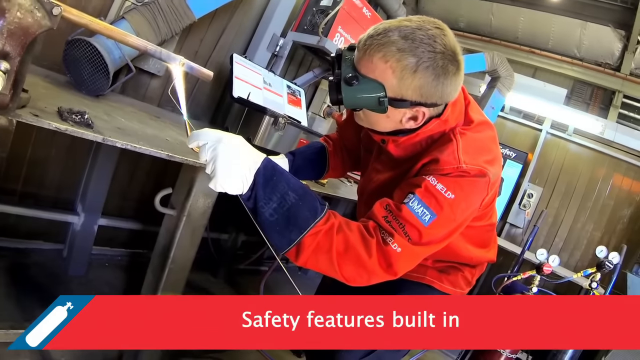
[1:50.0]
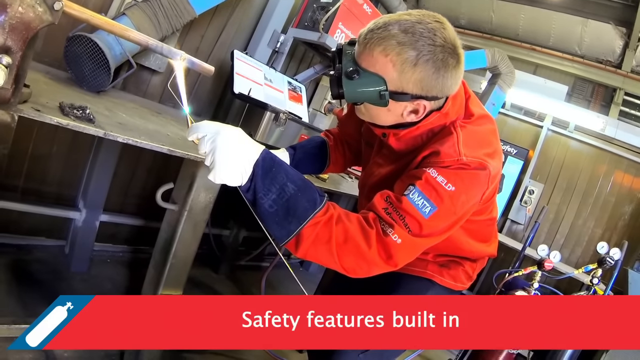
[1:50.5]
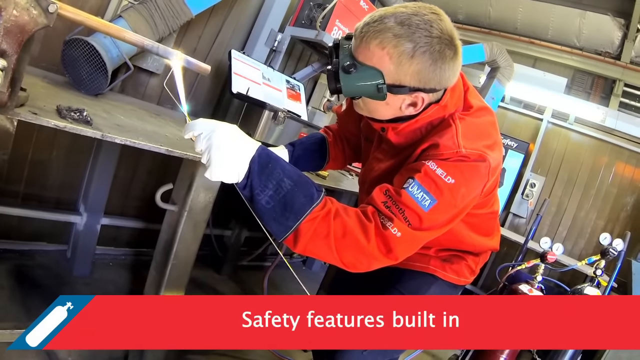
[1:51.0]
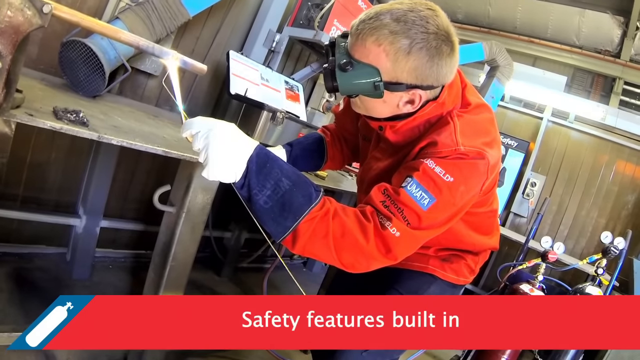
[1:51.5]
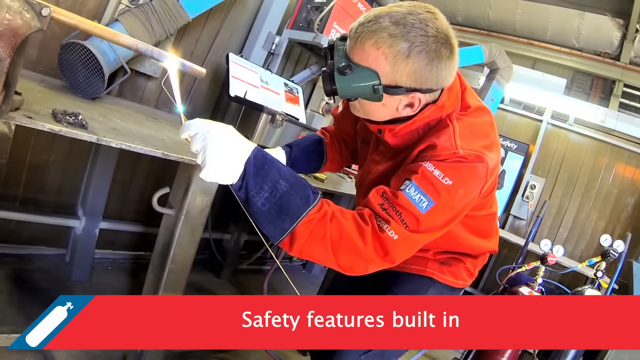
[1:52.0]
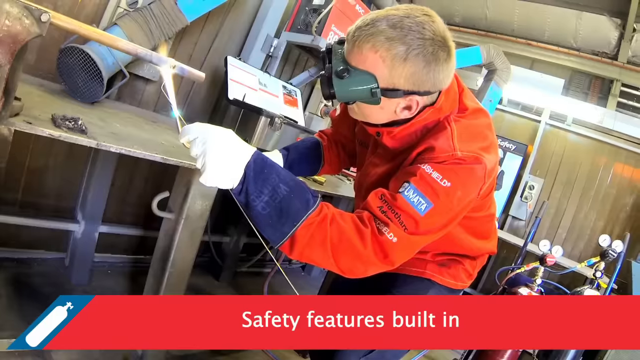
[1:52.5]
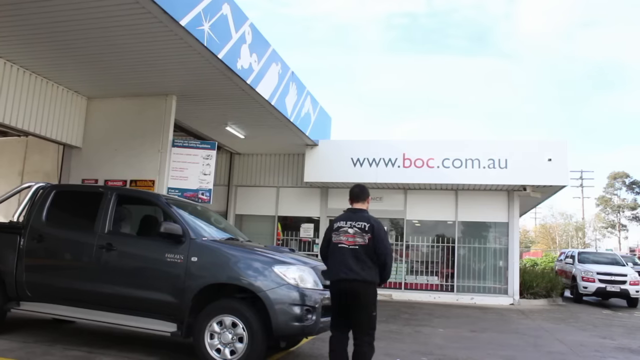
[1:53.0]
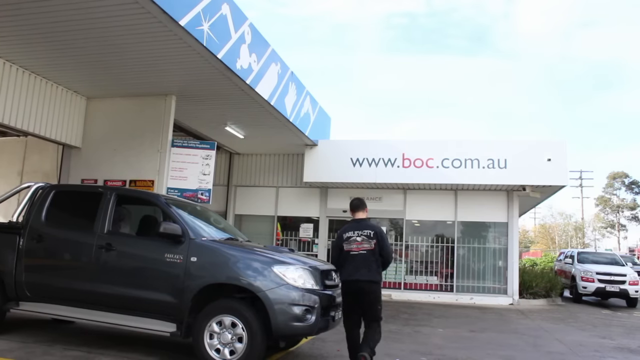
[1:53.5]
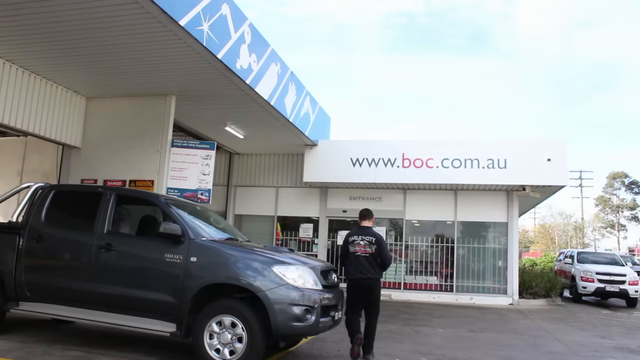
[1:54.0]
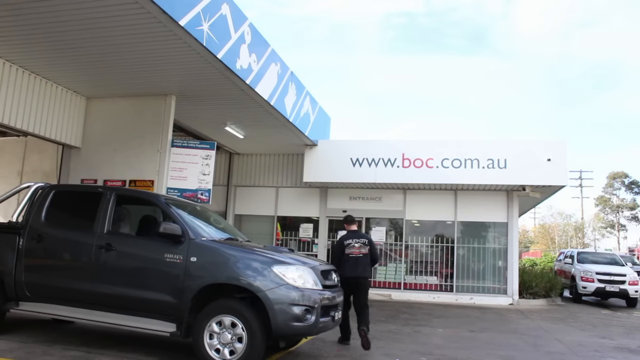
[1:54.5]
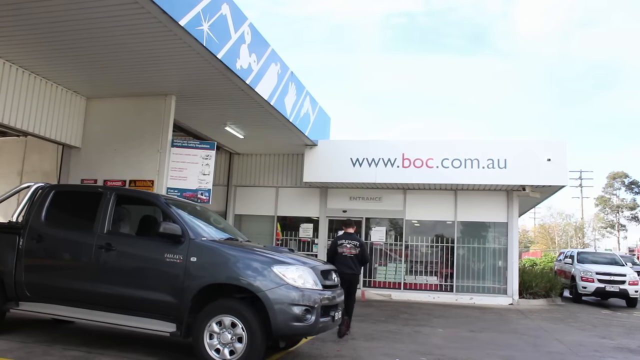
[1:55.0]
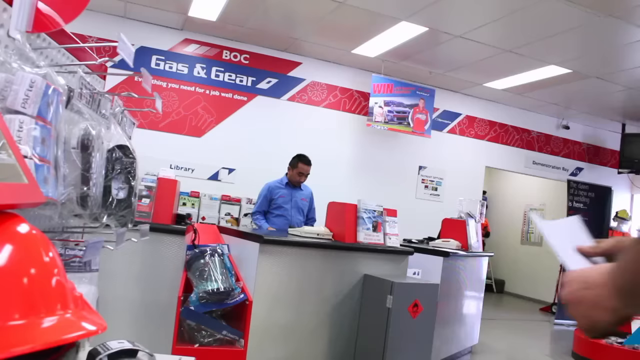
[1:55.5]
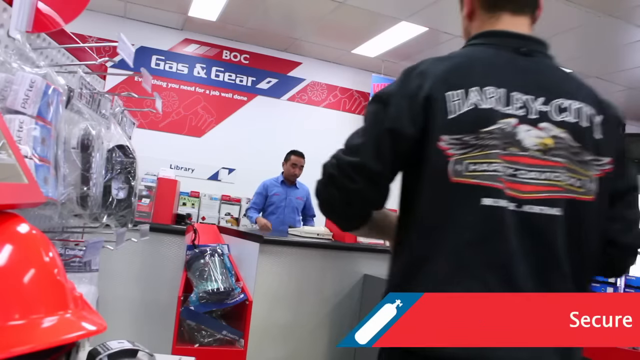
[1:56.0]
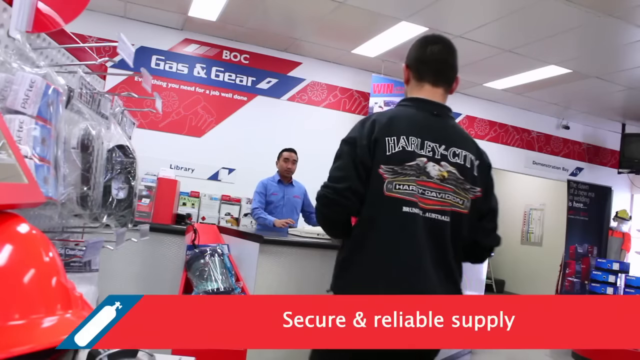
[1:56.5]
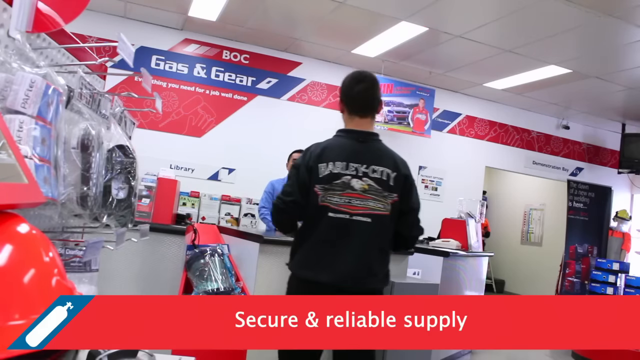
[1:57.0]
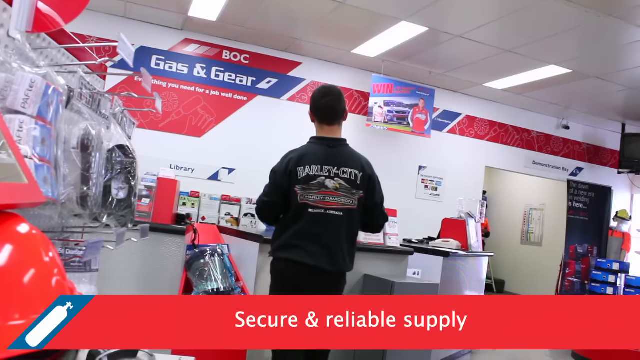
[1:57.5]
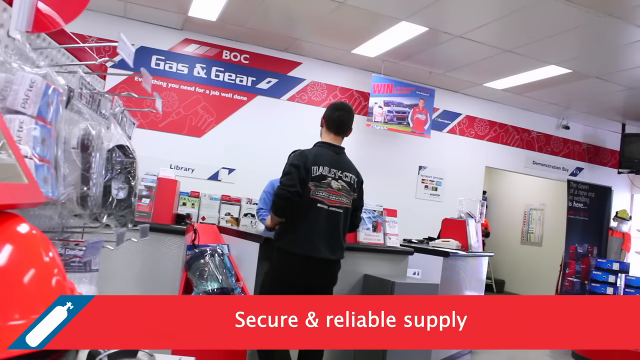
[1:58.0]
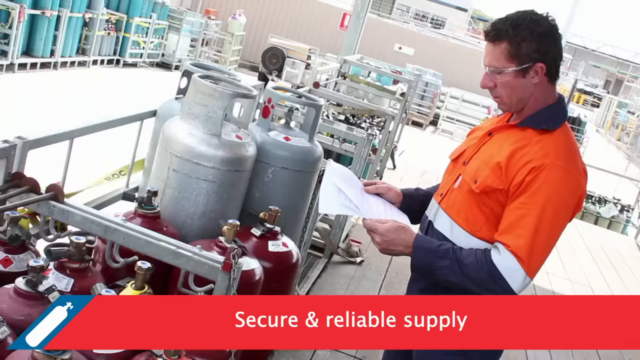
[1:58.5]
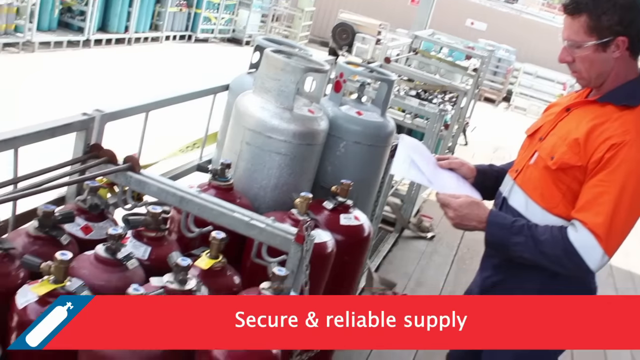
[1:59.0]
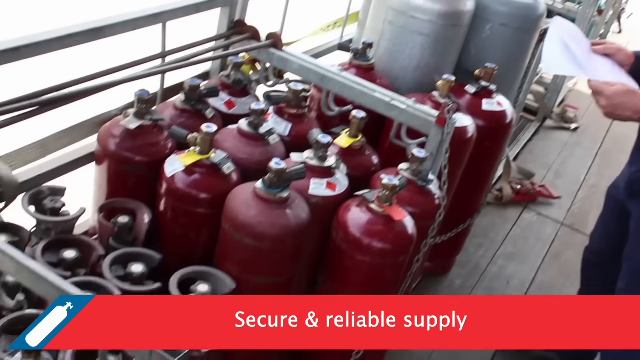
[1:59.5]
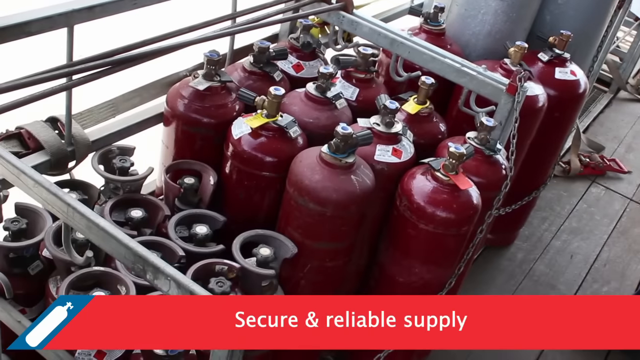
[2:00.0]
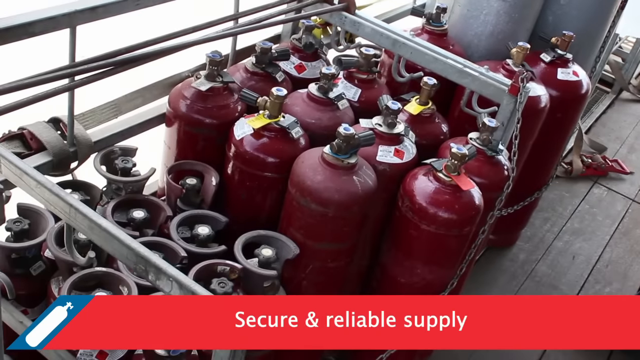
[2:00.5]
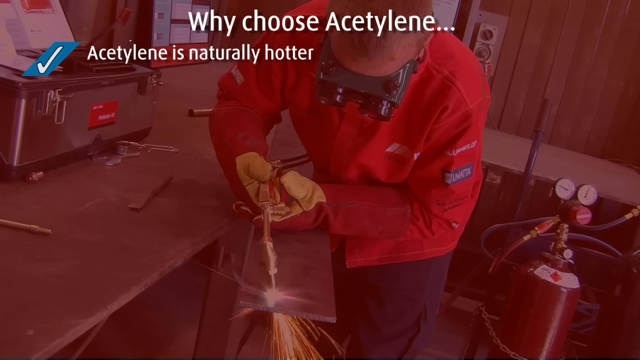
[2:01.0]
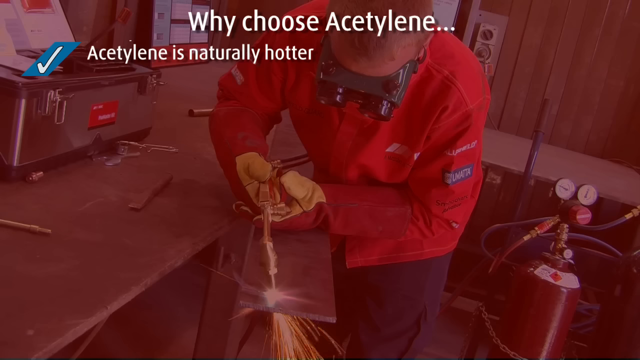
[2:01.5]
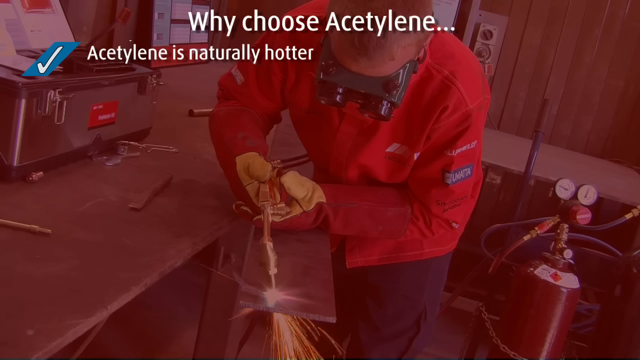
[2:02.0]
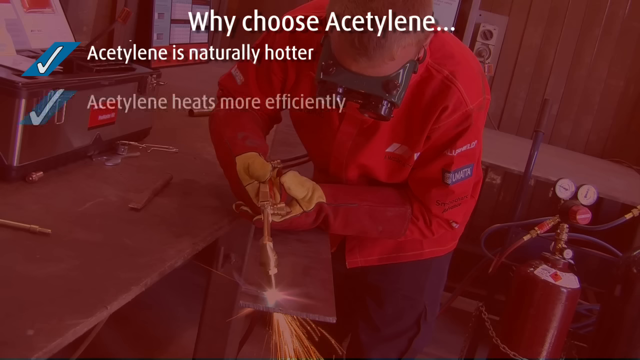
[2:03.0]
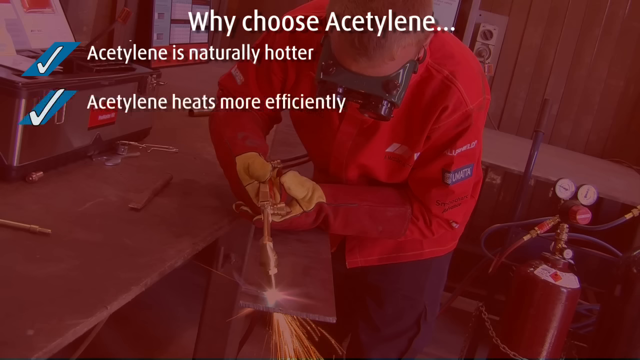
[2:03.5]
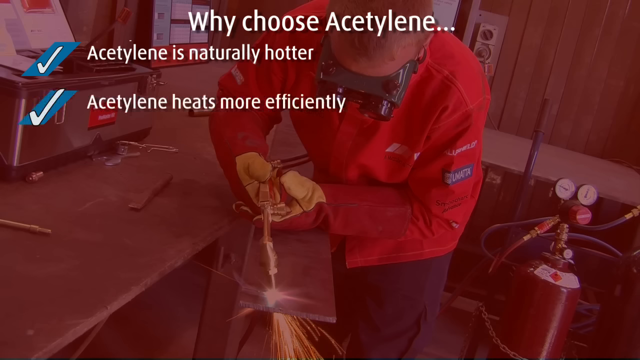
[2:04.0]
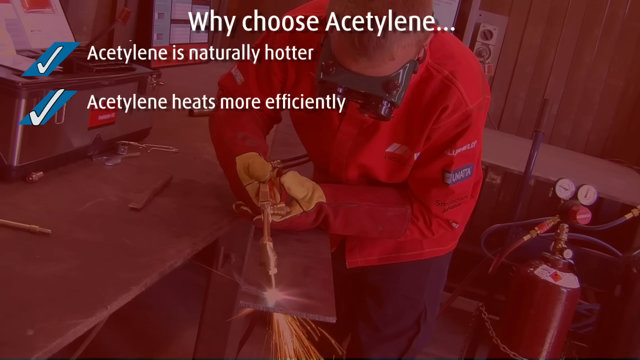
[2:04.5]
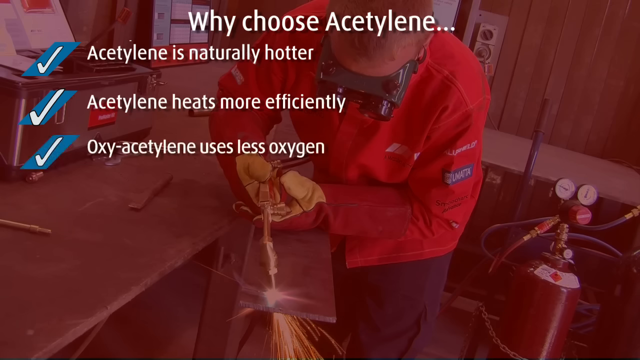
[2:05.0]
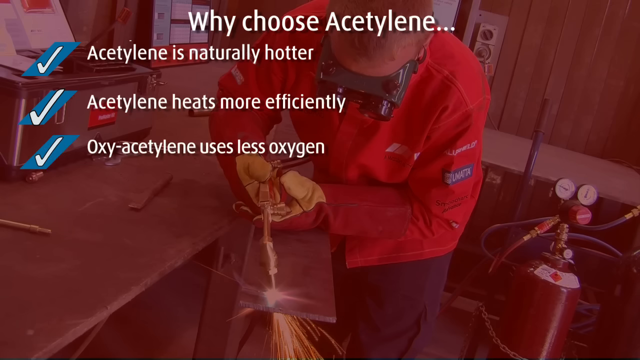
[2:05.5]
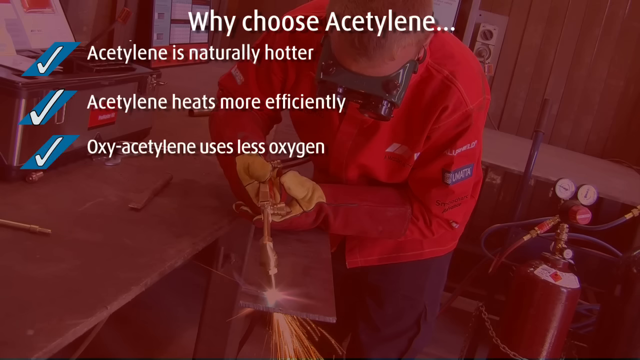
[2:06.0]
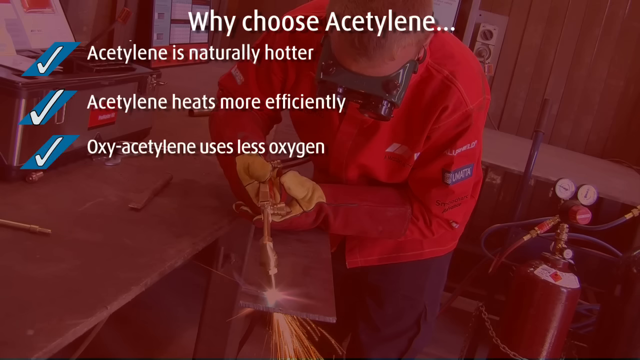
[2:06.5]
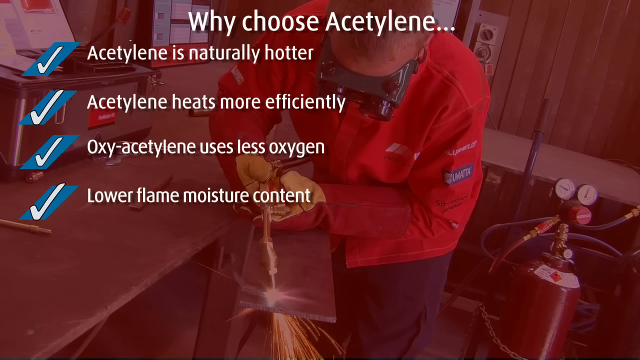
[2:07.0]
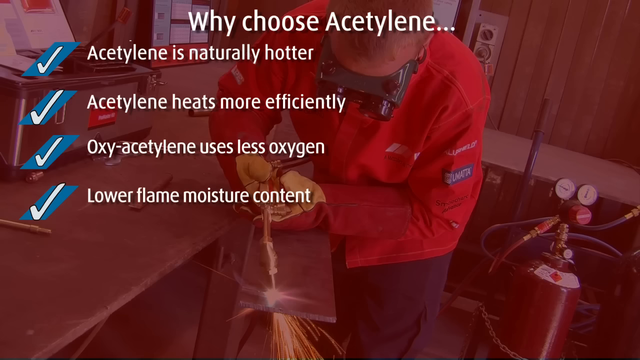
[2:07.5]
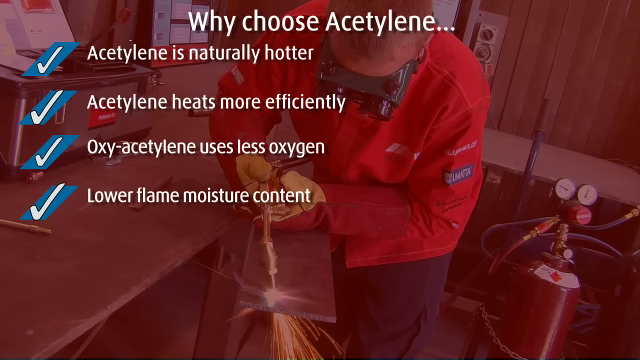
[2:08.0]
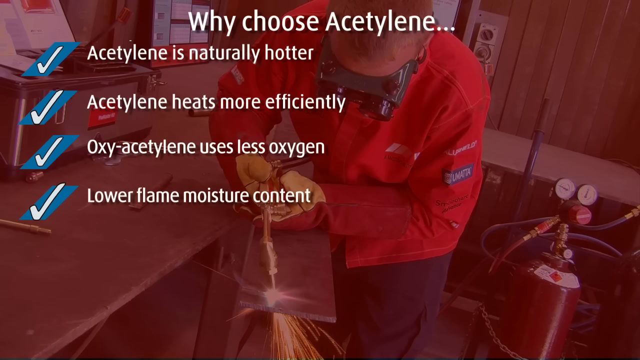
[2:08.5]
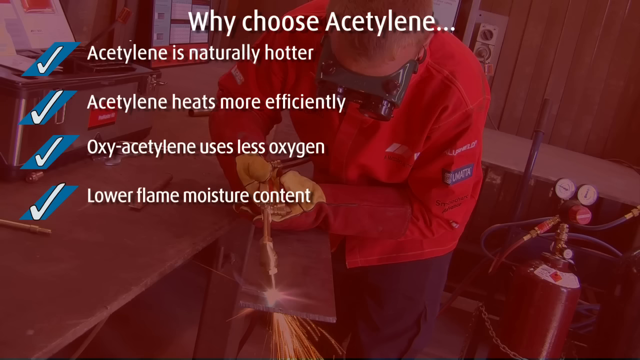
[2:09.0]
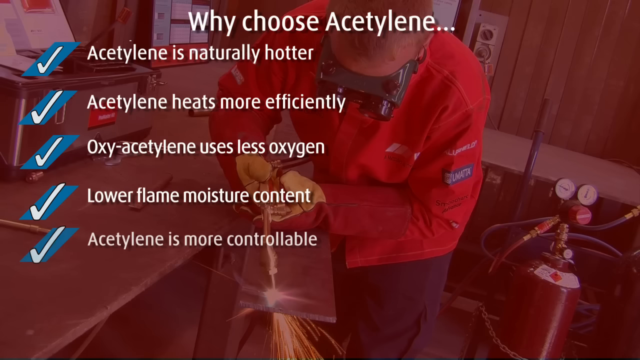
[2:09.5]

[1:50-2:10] The "safety features built in" banner is shown while the man in the red jacket uses the torch on a pipe. Next, the outside of a building appears, with the website "www.boc.com.au" at the top. A white car is on the right-hand side, and a dark gray car is in front of the building to the left. A man in a black shirt walks toward the front of the building, goes inside, and walks up to a person at the counter. The walls are red, white, and blue, a banner on the wall reads "gas and gear," and multiple items are on a shelf to the left. A banner at the bottom reads "secure and reliable supply." The man hands a paper to the man behind the counter. The video then returns to a screen of a man using a torch, with "why choose acetylene" at the top followed by "acetylene is naturally hotter," "acetylene heats more efficiently," "oxyacetylene uses less oxygen," "lower flame moisture content," and "acetylene is more controllable," each with a blue and white check mark.